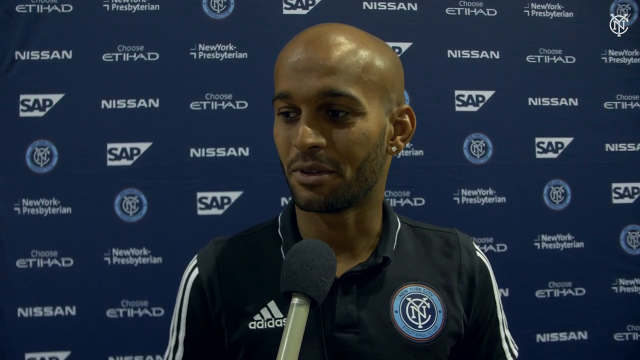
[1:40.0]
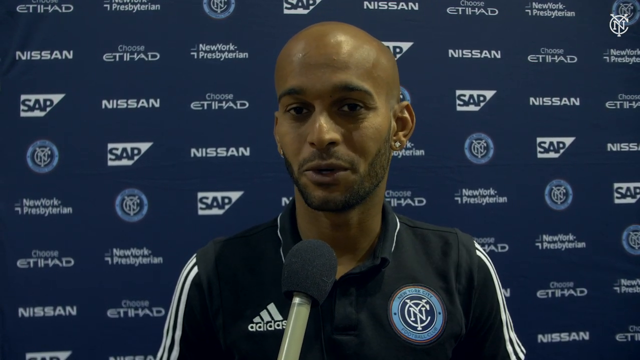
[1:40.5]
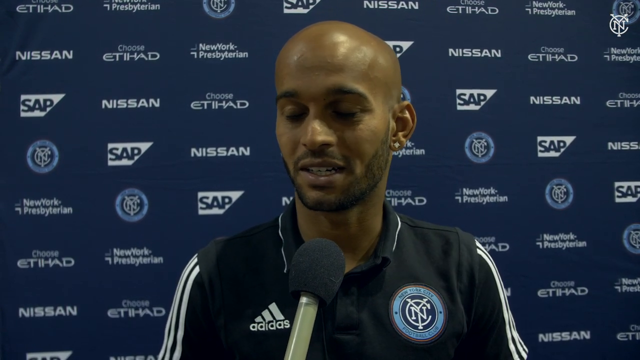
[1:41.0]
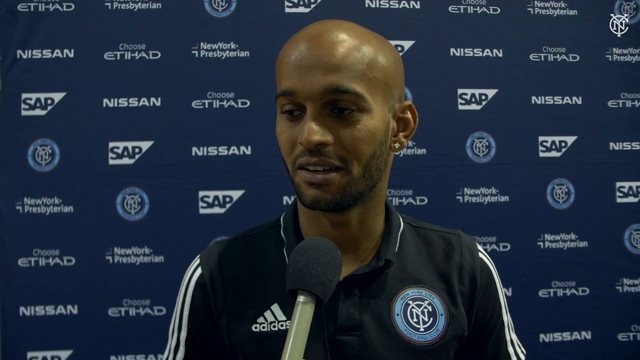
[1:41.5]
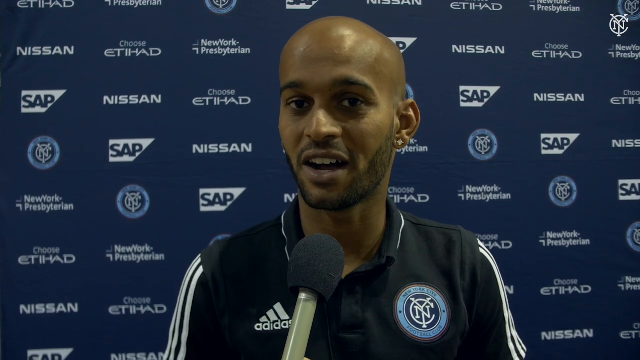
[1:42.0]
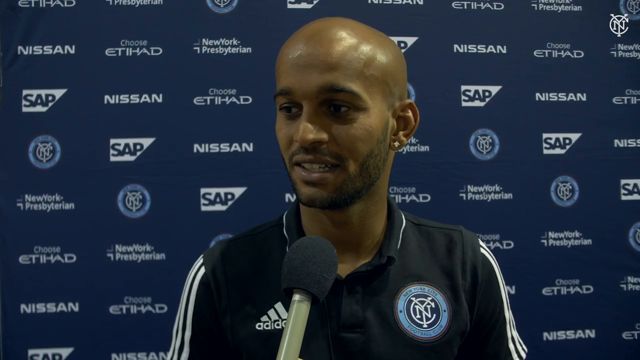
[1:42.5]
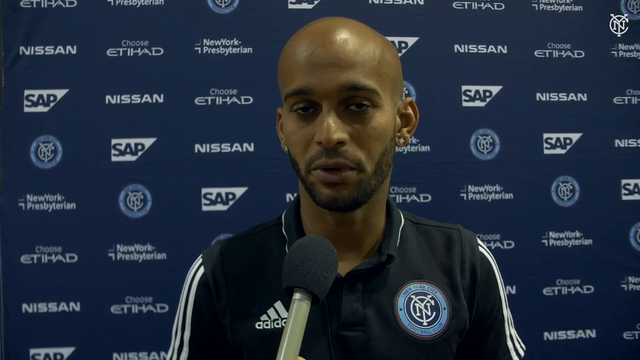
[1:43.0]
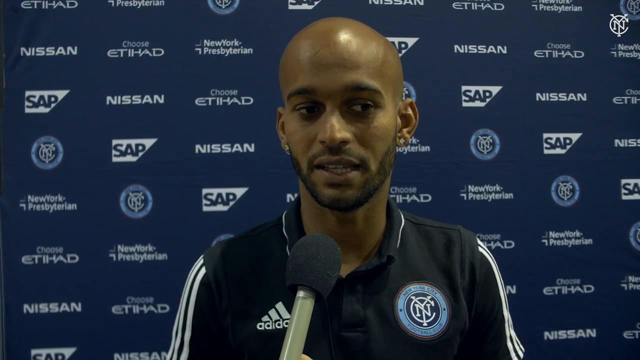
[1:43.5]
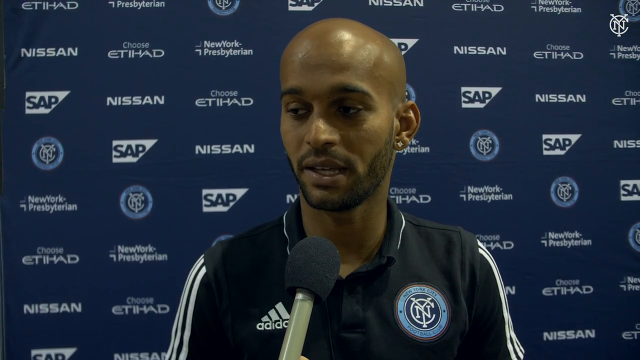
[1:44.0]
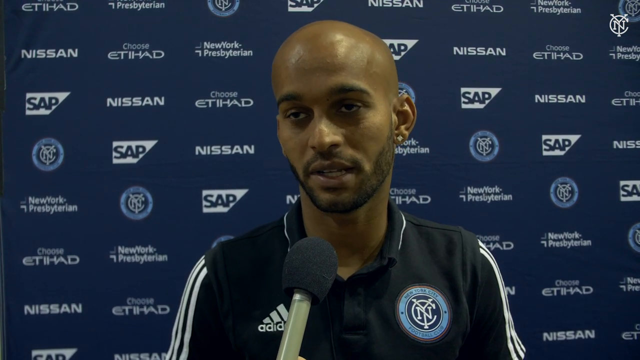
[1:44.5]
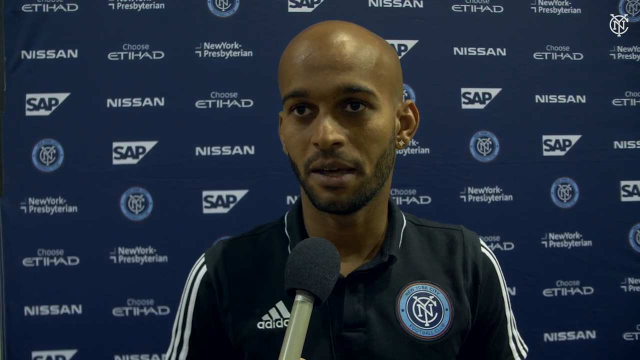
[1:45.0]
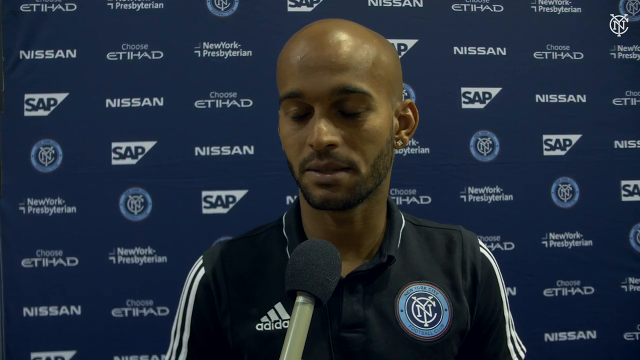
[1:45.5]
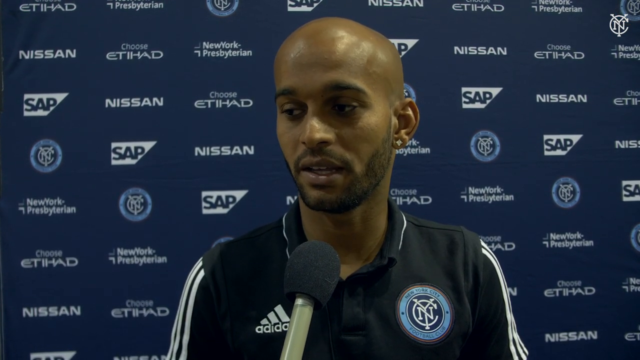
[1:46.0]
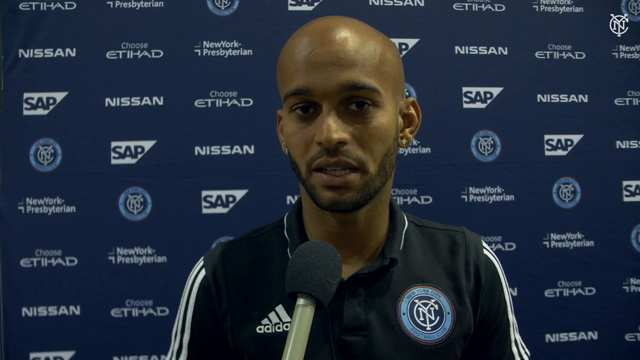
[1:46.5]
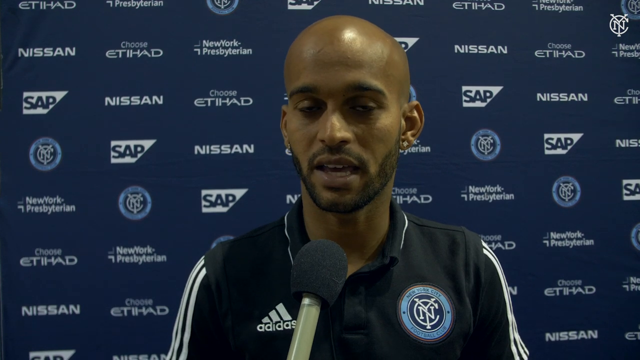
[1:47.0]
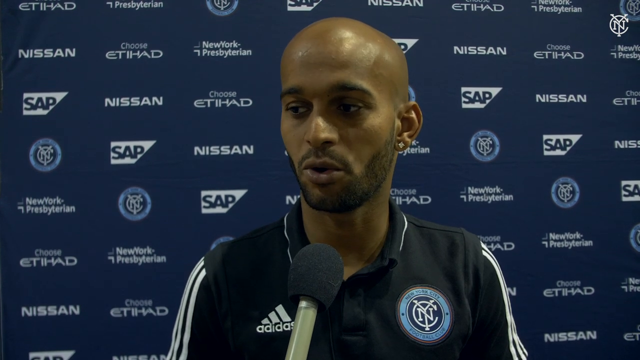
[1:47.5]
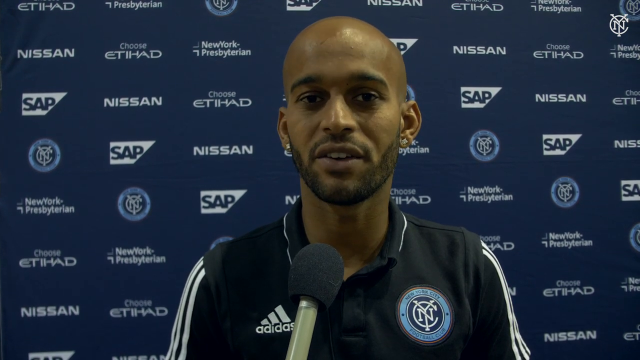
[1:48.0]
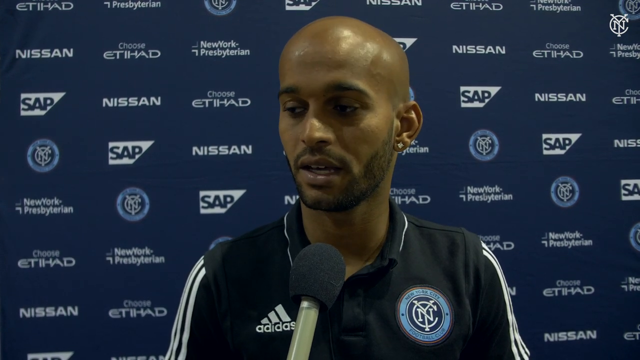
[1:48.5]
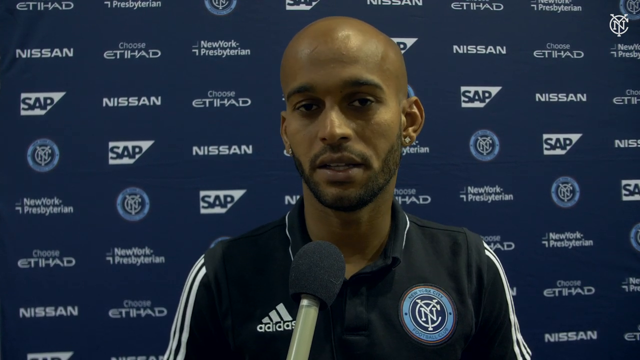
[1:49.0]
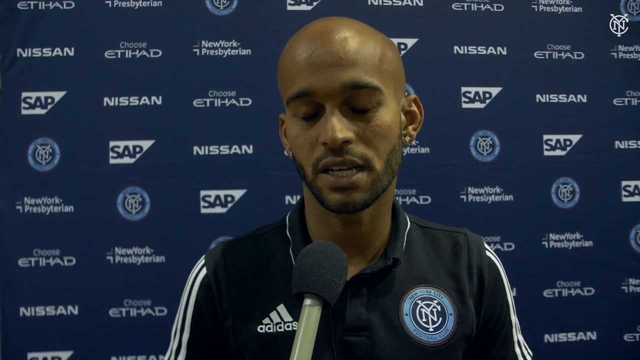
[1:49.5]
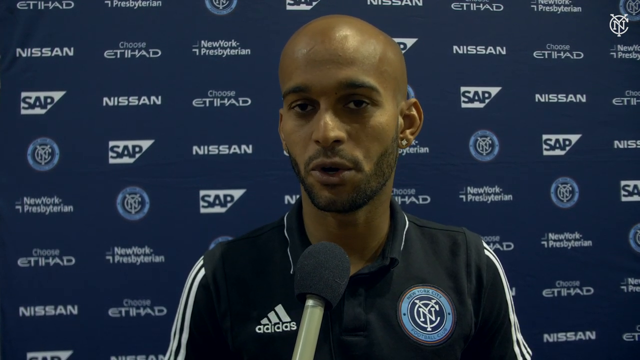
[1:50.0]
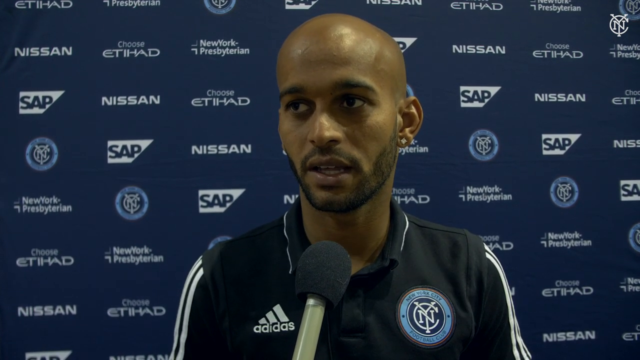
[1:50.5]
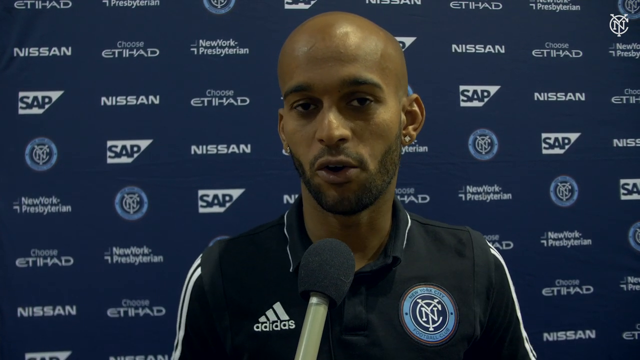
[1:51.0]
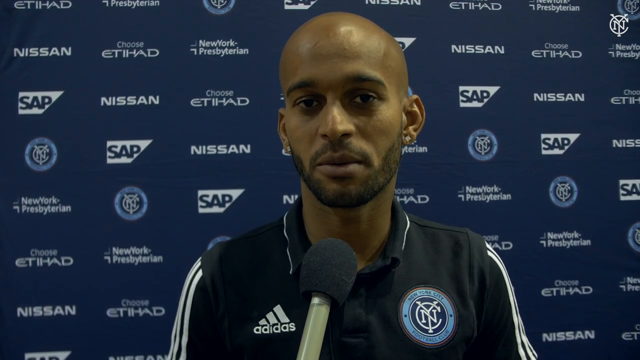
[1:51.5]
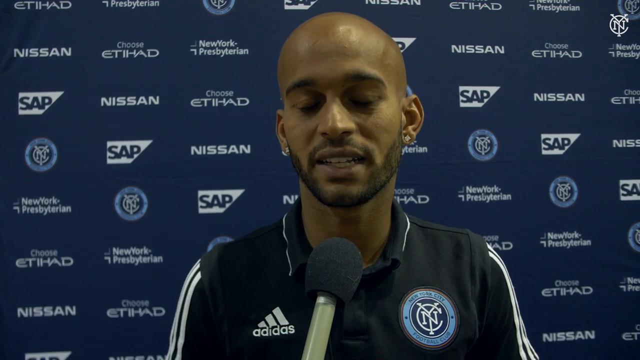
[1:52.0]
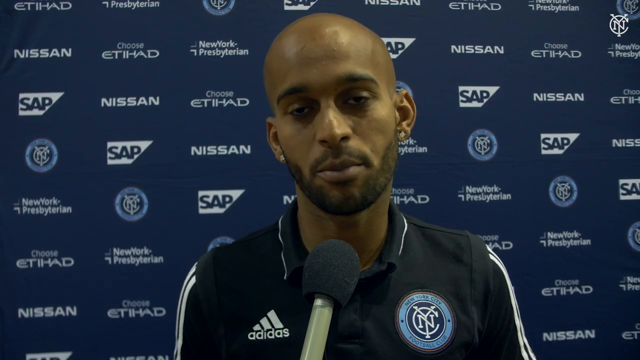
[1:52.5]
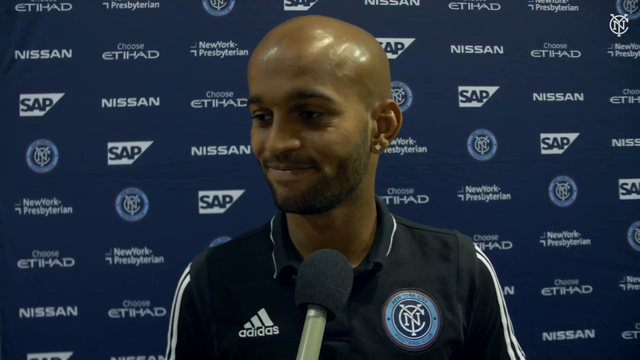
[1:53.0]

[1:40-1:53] A man being interviewed speaks to the camera, his head leaning slightly to his right, toward the left side of the frame. A microphone comes into view at the bottom center of the image. He speaks, looks toward the camera and glances to his right; his eyes appear to glance in the direction of his head. He then slightly turns his head and looks slightly upward to his right.